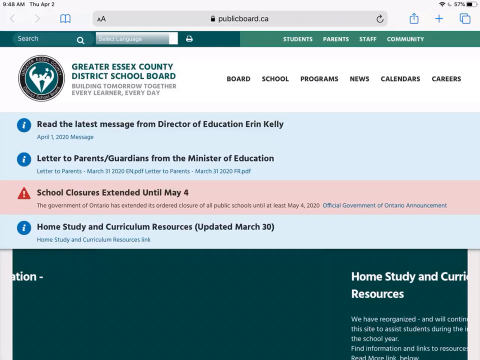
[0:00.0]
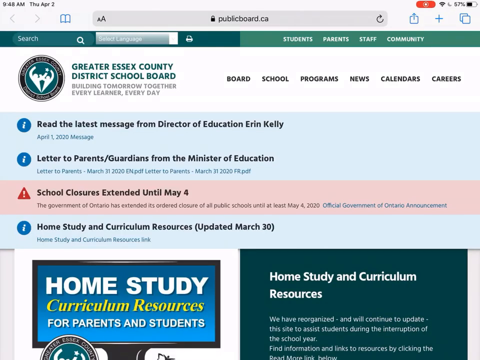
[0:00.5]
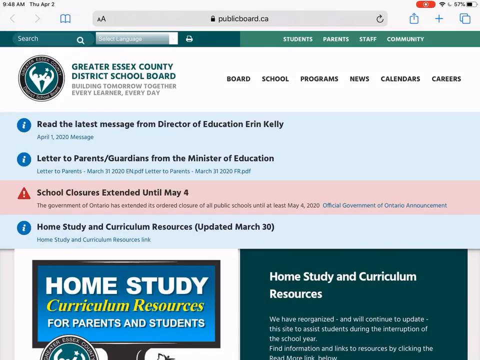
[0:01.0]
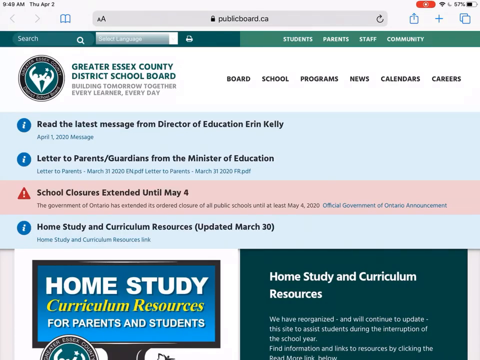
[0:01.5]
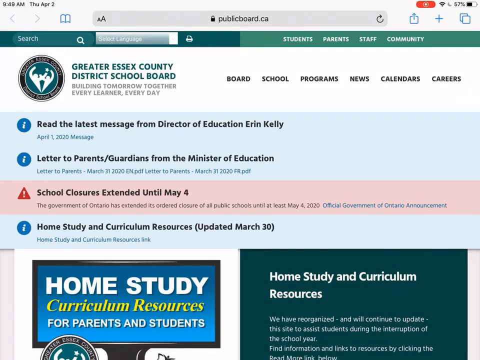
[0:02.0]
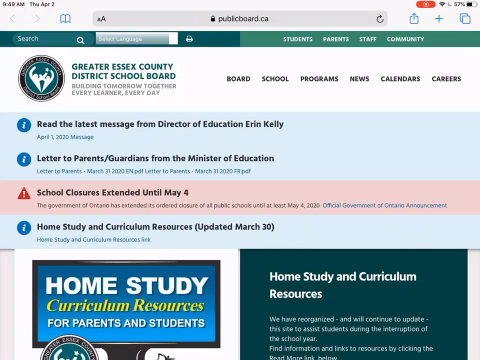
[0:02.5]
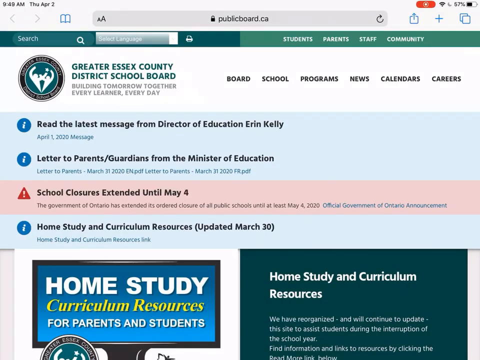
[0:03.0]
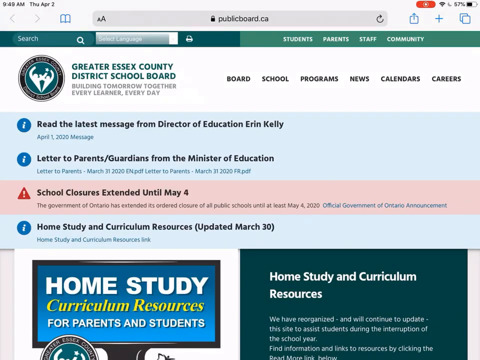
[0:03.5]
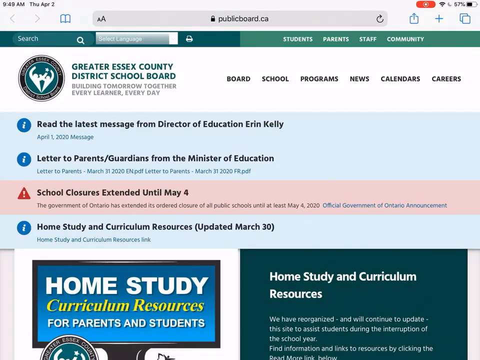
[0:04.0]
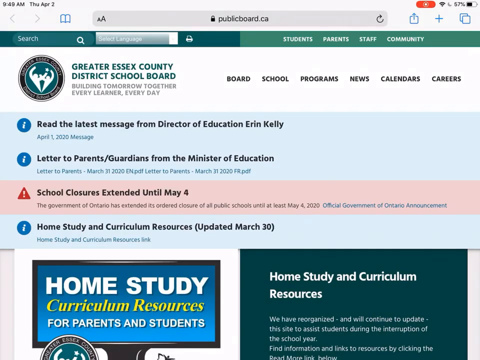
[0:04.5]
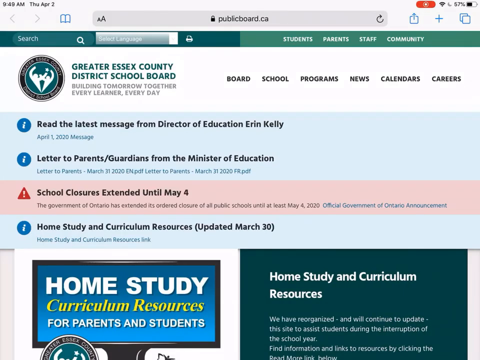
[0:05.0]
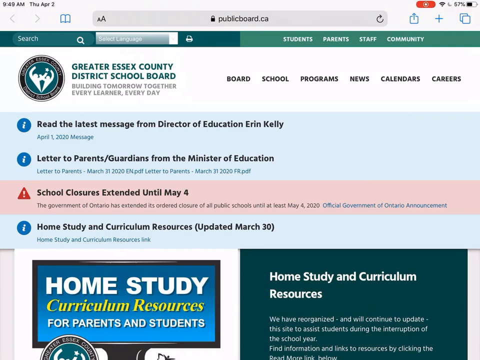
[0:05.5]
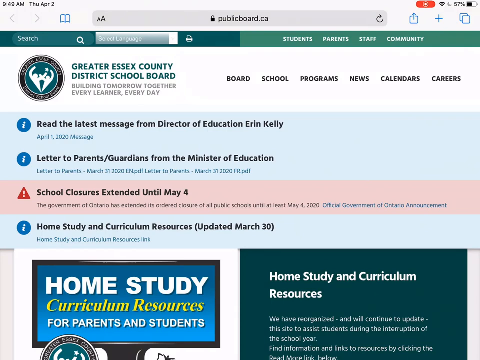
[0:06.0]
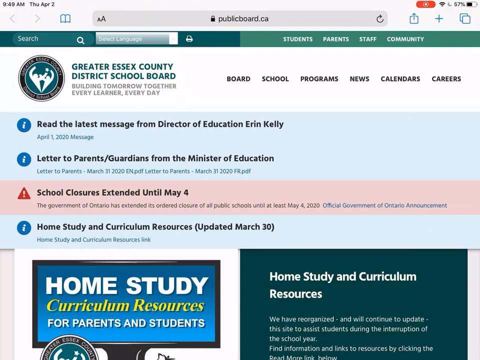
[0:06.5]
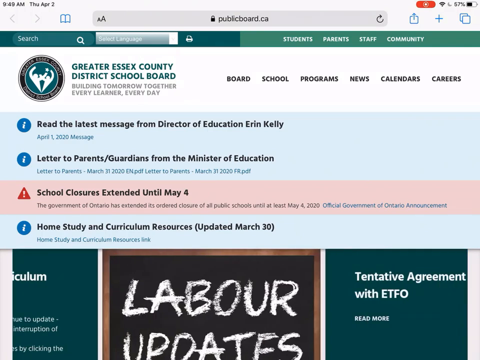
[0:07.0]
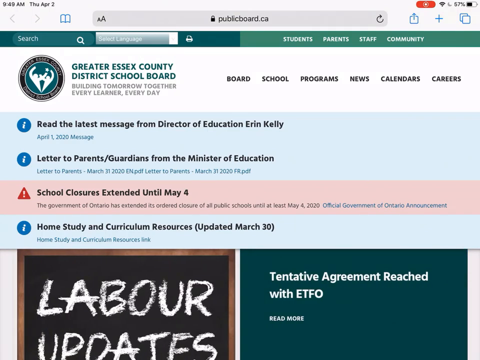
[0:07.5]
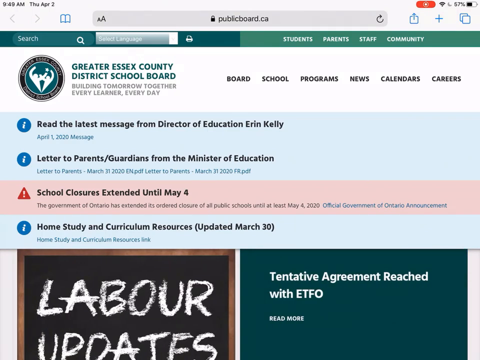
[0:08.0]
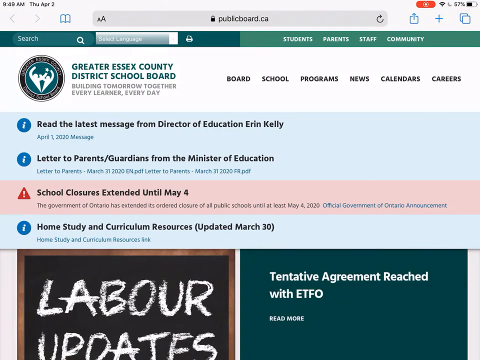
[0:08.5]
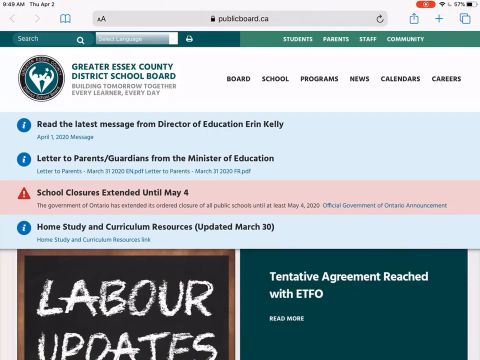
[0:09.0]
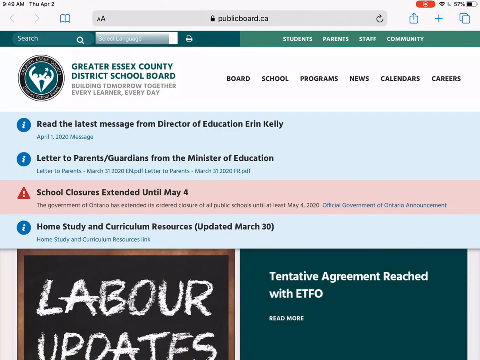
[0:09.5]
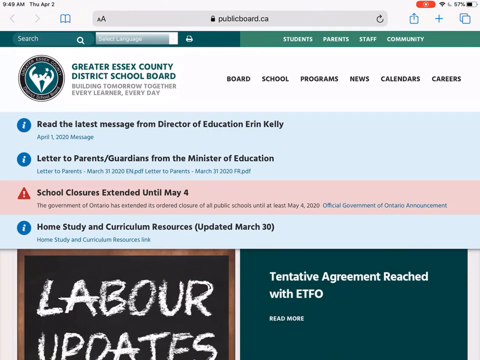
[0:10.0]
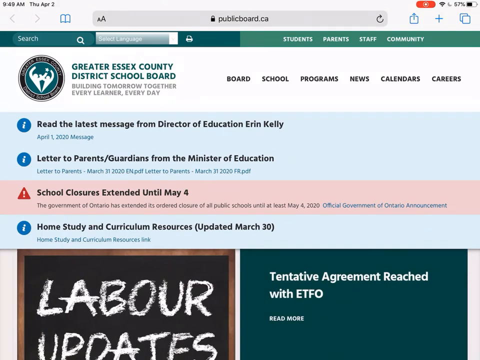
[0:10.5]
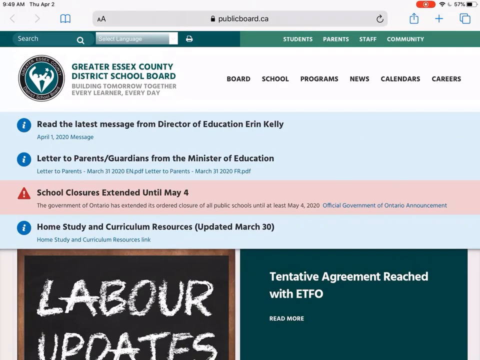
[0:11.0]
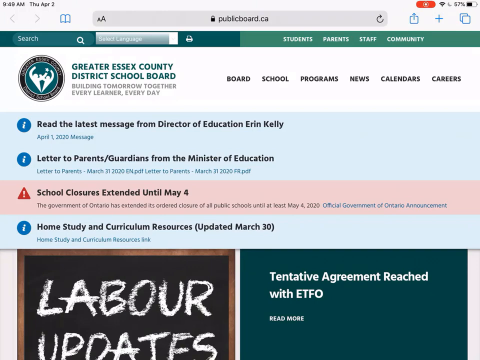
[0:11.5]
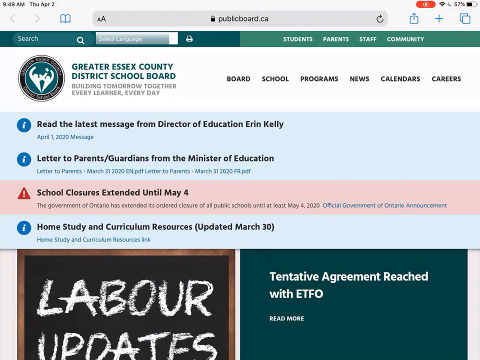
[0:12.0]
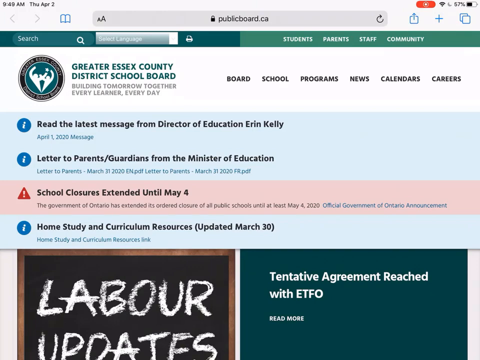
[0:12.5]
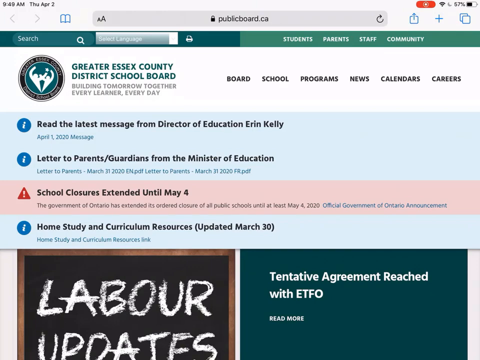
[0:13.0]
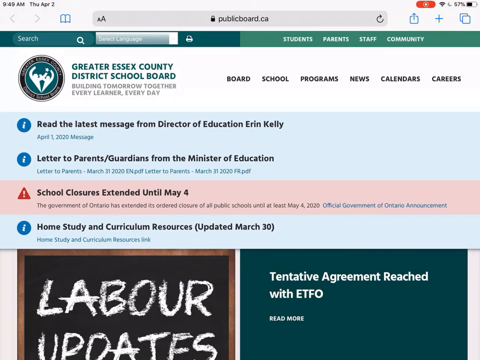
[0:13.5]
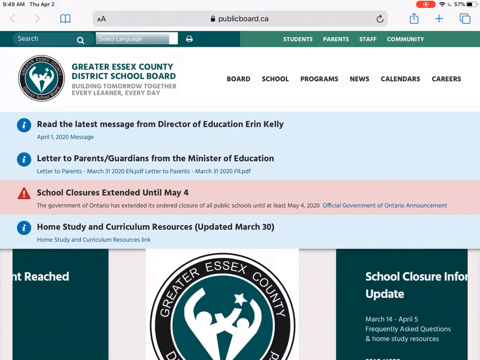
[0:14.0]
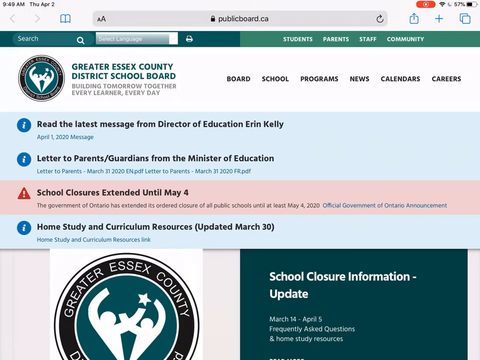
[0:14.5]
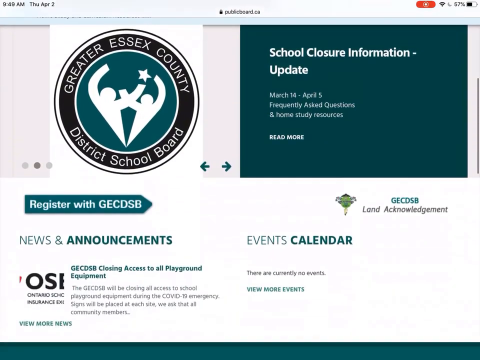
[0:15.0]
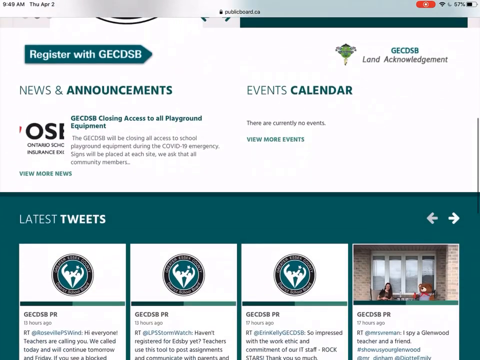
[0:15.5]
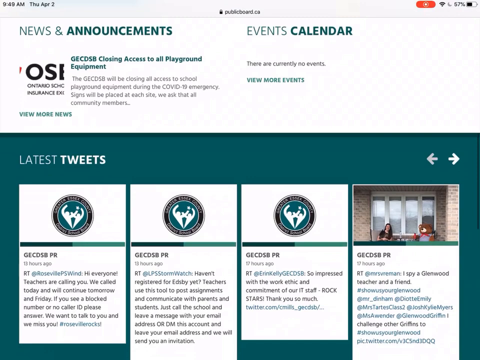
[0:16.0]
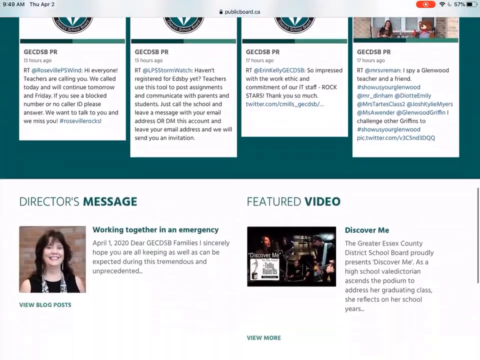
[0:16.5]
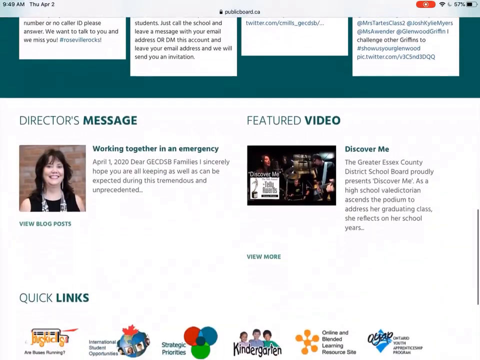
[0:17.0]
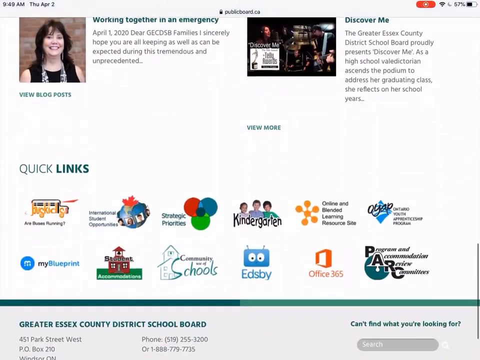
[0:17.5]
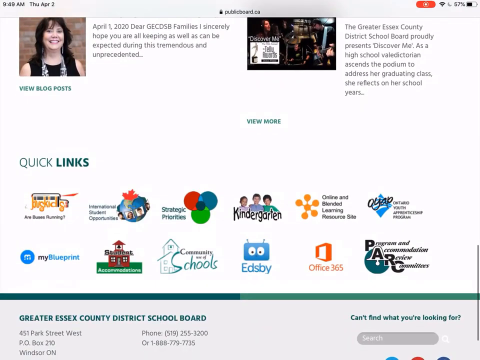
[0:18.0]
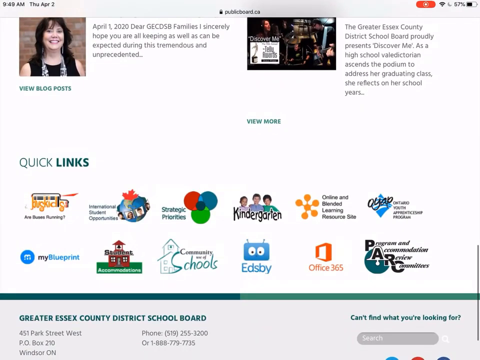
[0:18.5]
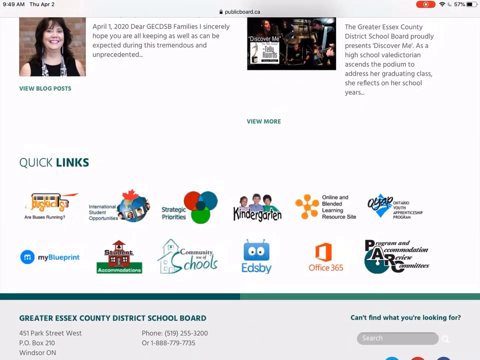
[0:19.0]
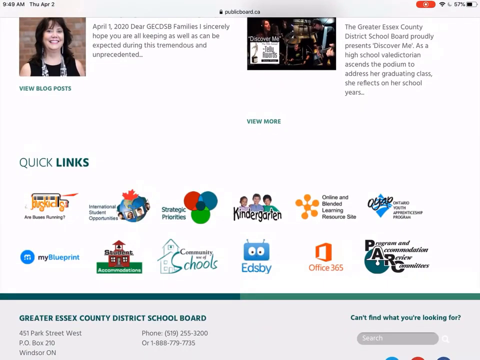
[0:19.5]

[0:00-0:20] The video opens on the landing page of the Greater Essex County District School Board, with that name in the upper left-hand corner. At the very top there is a search bar. Below it is a green bar that also has a search tab, and on its right it reads "Students, Parents, Staff, and Community." Below that, on the right next to the school board name, are "Board, School, Programs, News, Calendars, and Careers." Further down the page reads "read the latest message from Director of Education Erin Kelly," "a letter to parents, guardians from the Minister of Education," "school closures extended until May 4th," and "Home Study and Curriculum Resources updated March 30th." Along the bottom of the screen, text scrolls from right to left: "Home Study," "Labor Updates," "Tentative Agreement Reached with ETFO," "Home Study and Curriculum Resources," and it keeps scrolling. The screen then changes and the person scrolls up and down the page, continuing from top to bottom.